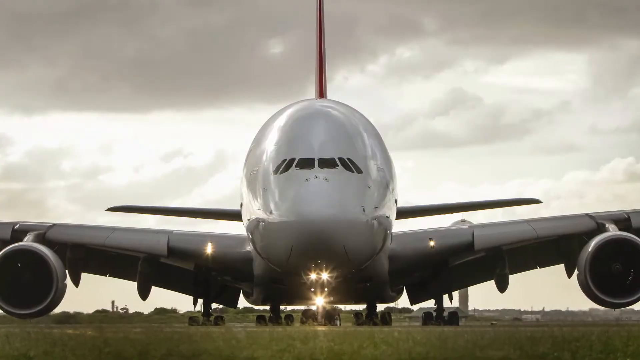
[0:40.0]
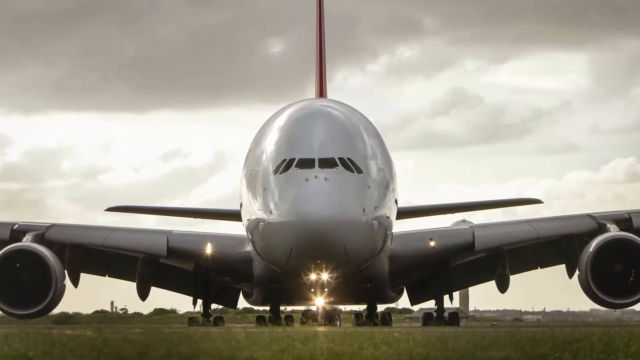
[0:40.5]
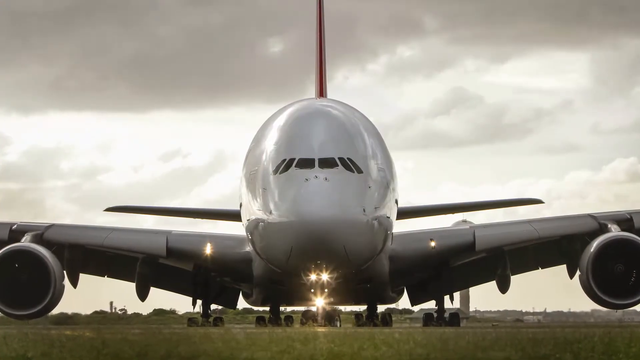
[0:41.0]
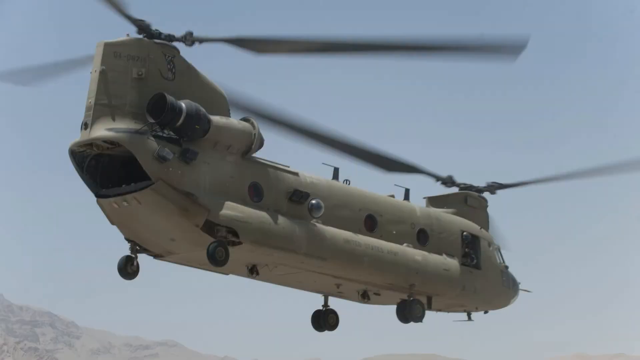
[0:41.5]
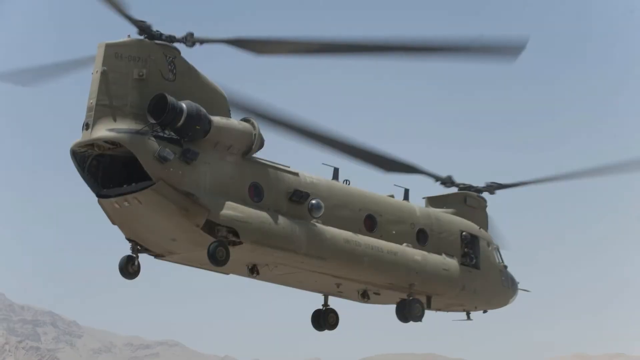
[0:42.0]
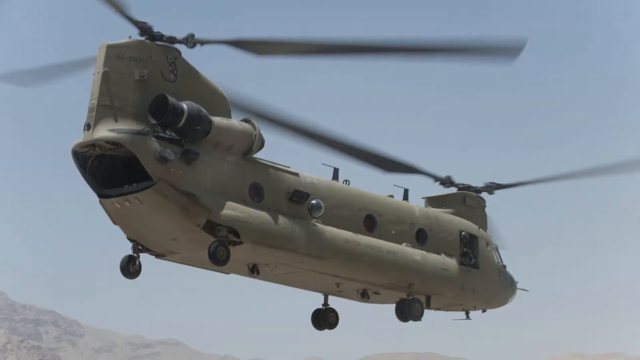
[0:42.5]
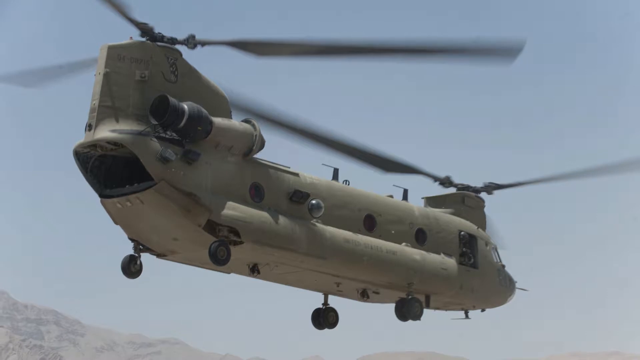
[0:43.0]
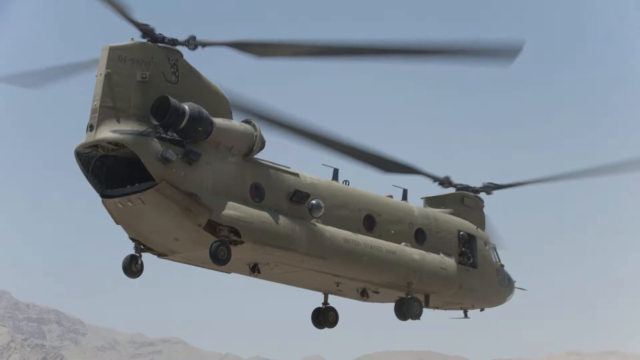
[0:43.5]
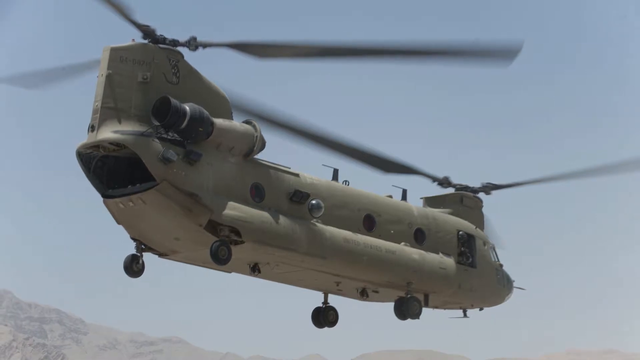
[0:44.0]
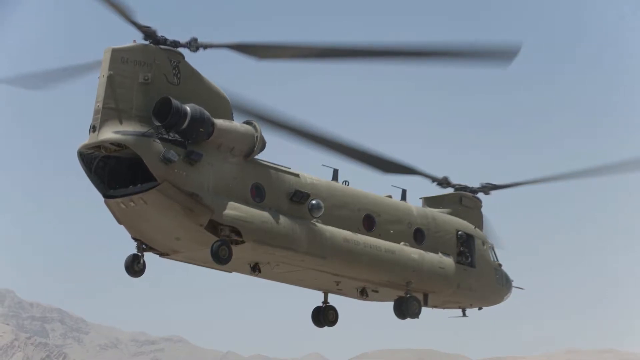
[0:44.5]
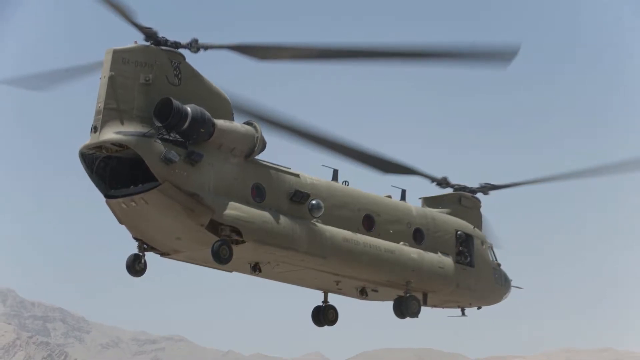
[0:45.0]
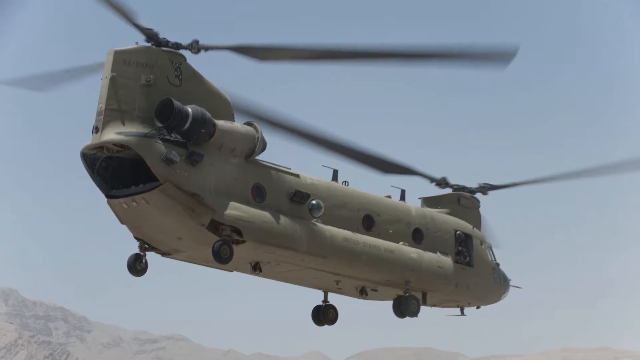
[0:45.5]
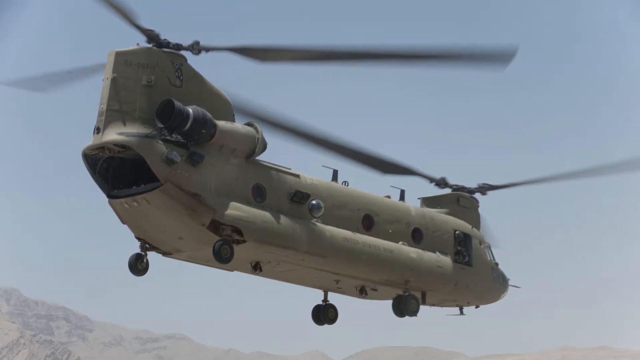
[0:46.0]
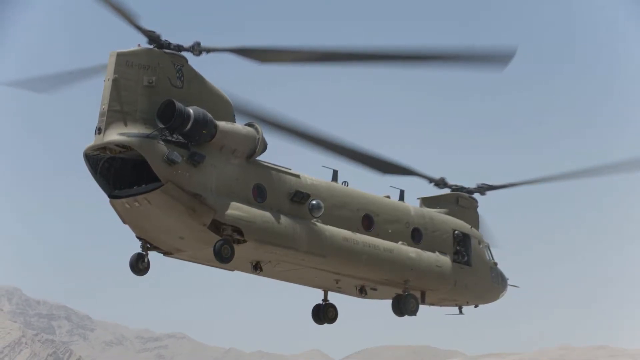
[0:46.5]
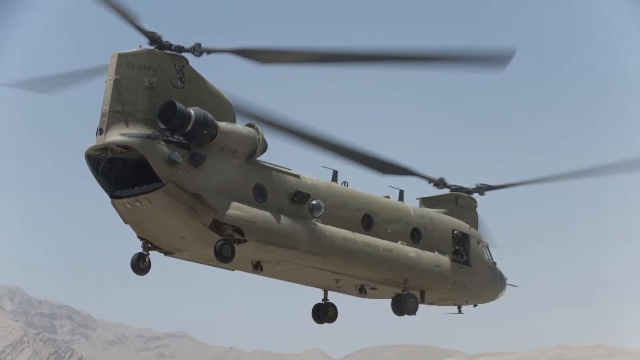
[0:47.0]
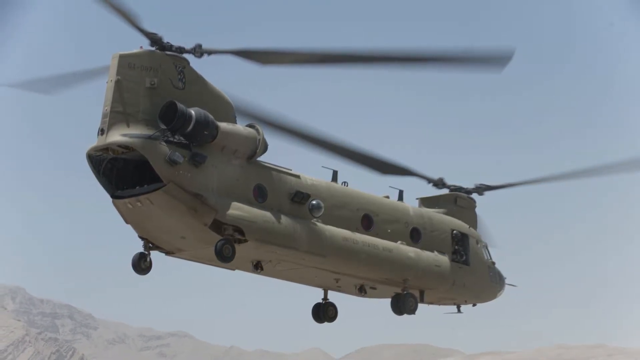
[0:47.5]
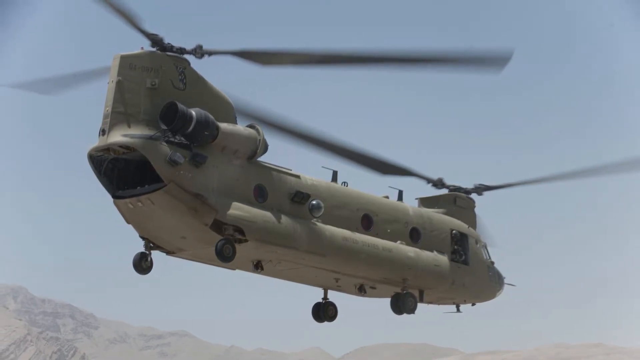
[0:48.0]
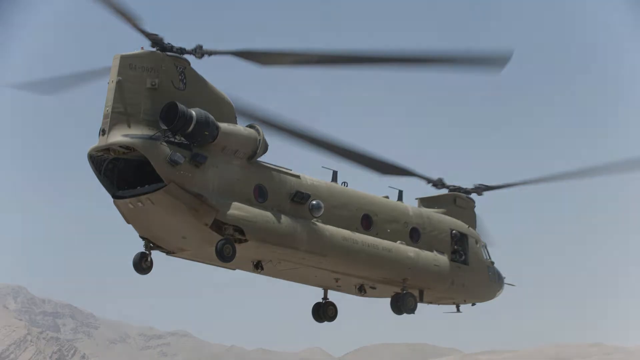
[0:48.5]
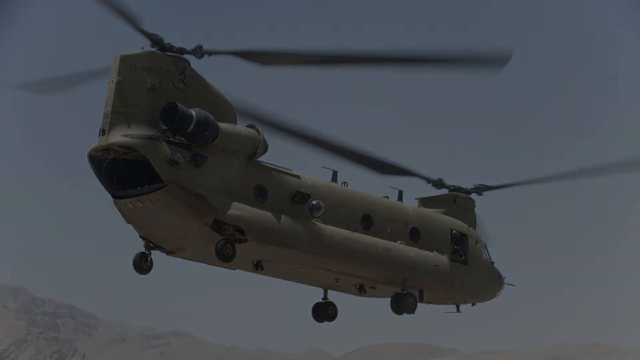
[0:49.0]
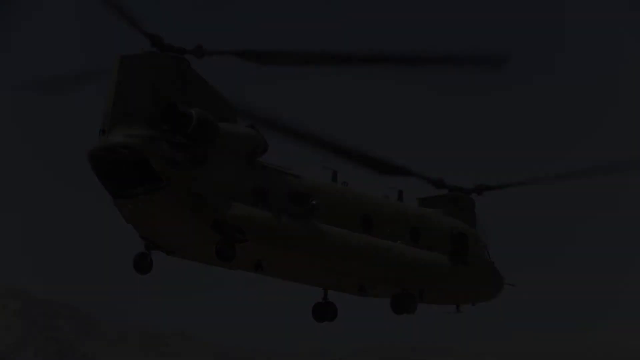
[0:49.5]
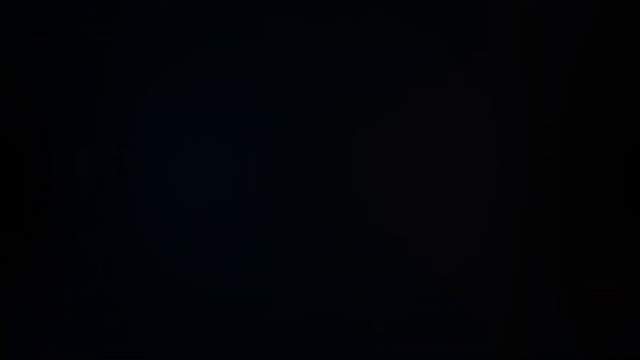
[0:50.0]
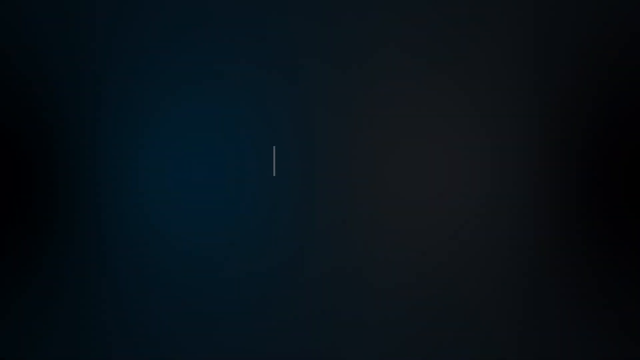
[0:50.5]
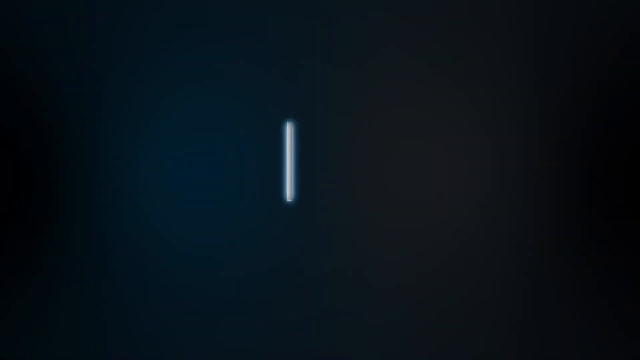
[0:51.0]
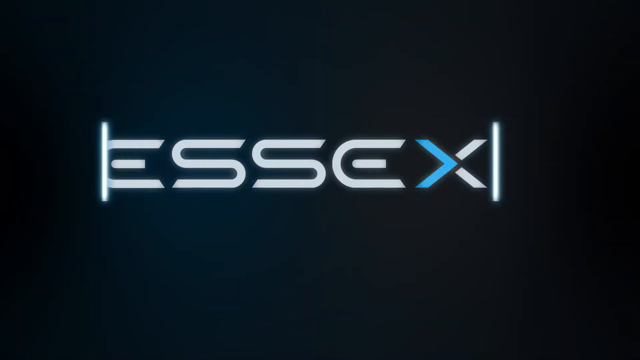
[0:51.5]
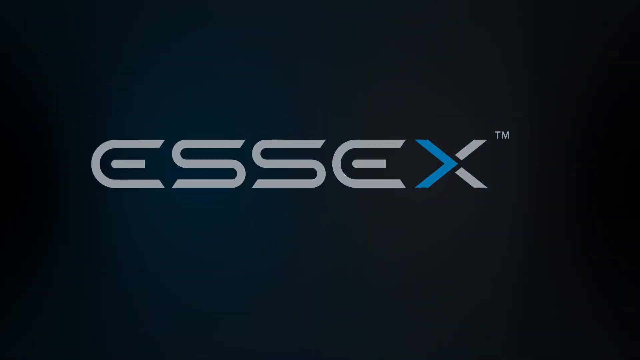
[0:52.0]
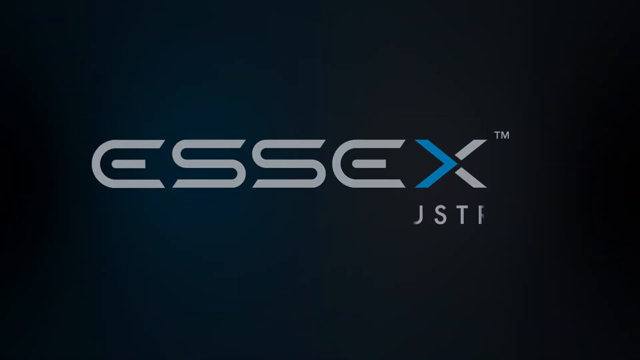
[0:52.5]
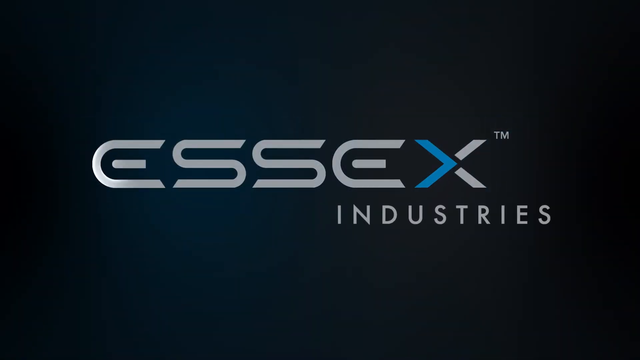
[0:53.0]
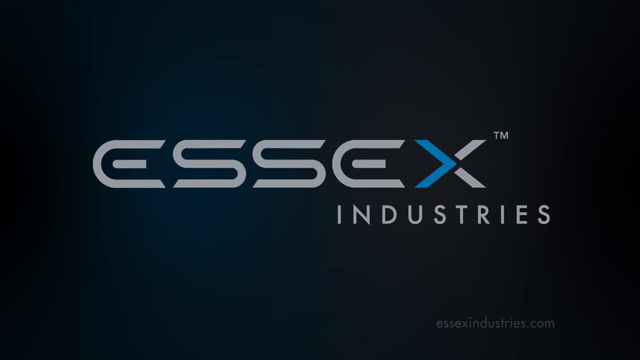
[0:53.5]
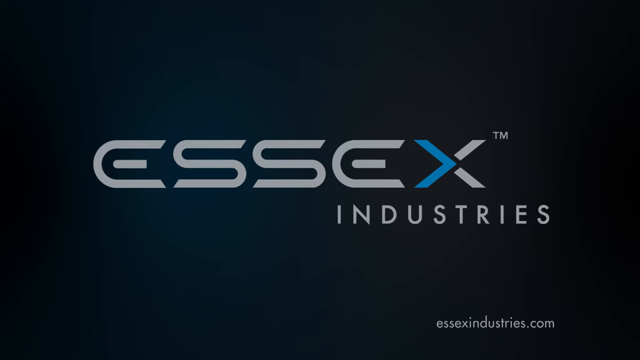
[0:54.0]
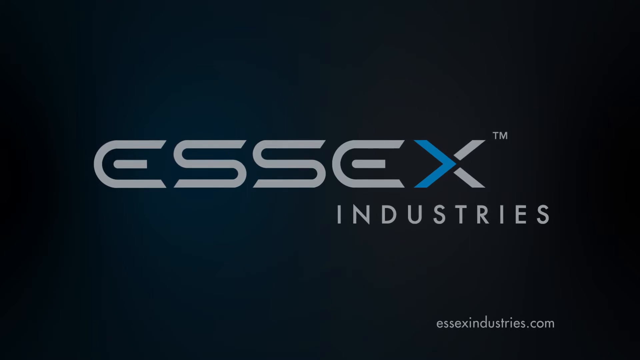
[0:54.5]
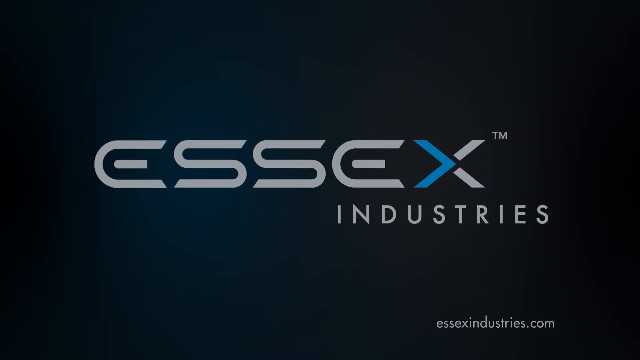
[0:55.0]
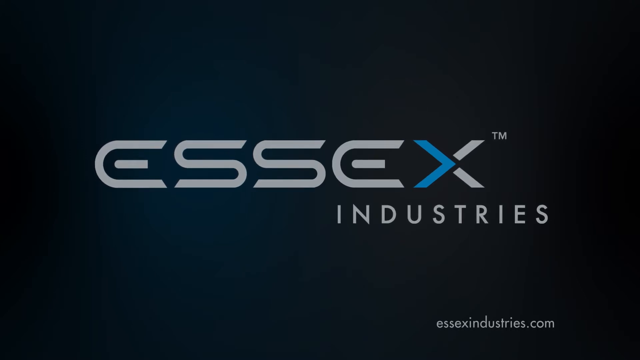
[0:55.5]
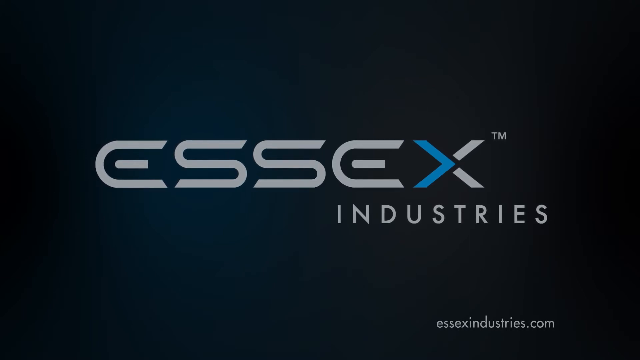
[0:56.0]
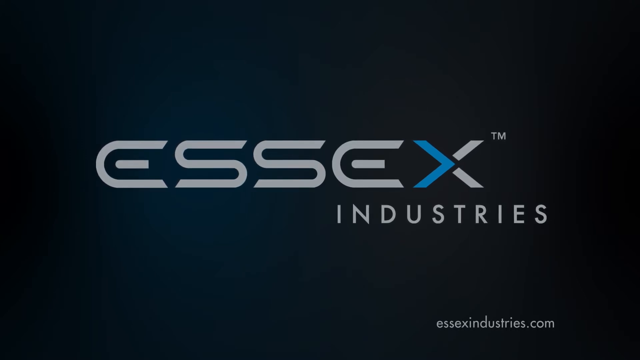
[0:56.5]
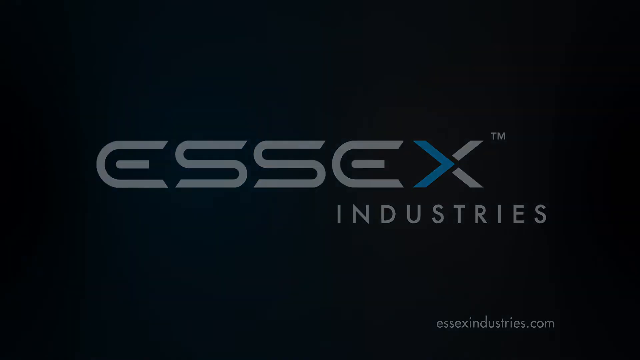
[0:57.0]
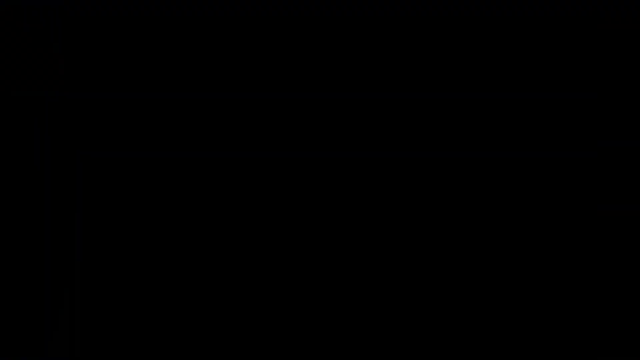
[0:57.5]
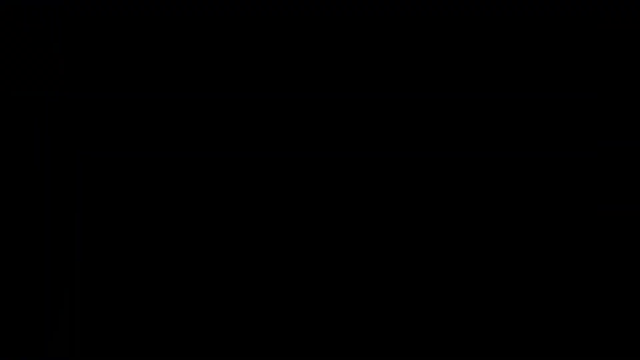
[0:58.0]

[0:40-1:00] A camouflage-green military helicopter flies in the desert on a sunny day. It has circles on its side that look like windows, four sets of black wheels below it, and a small opening at the back; its propellers, one set in the front and one in the back, are in motion. The scene transitions to the words "Essex Industries" over a black background. "Essex" is written in capital letters in a unique font; most letters are gray, but the left half of the X at the end is blue, and there is a TM trademark symbol. A website beginning "Essex industries" then appears, and the background becomes black again.